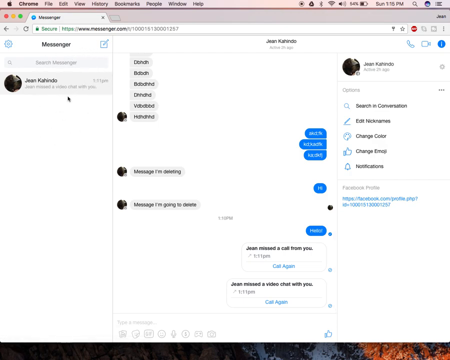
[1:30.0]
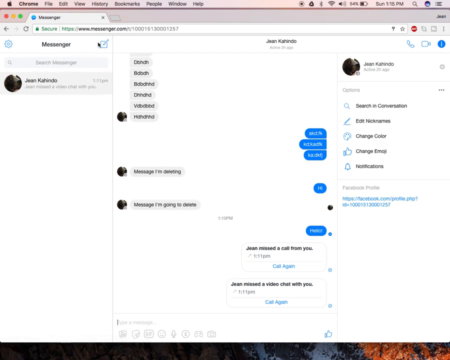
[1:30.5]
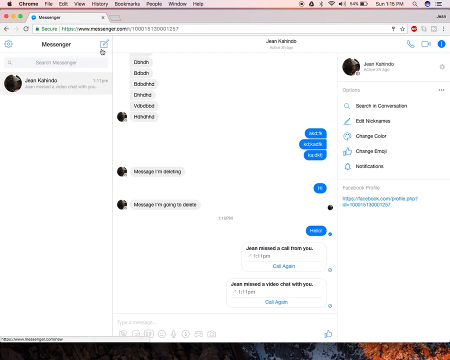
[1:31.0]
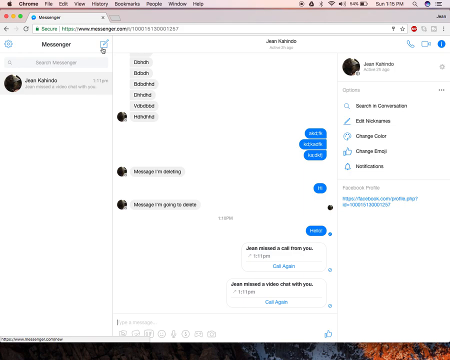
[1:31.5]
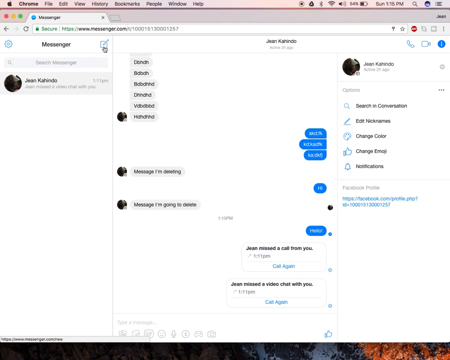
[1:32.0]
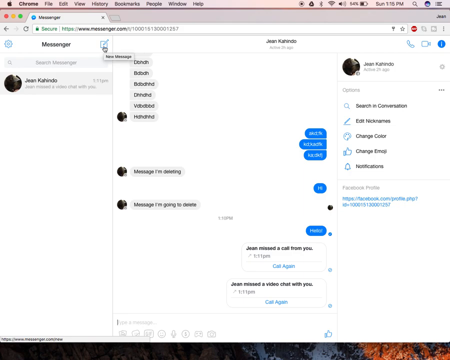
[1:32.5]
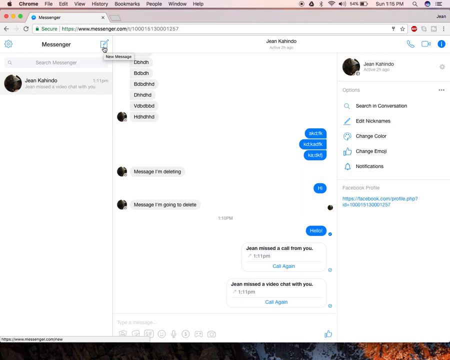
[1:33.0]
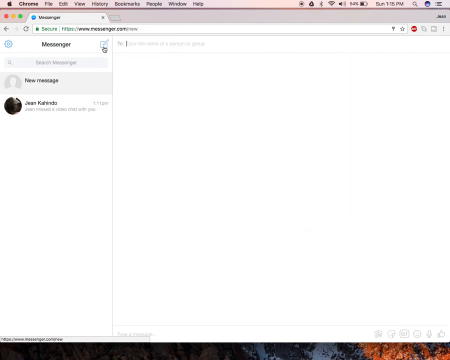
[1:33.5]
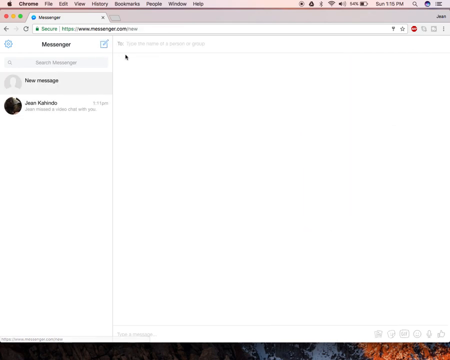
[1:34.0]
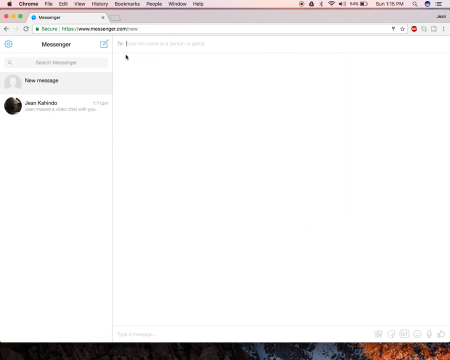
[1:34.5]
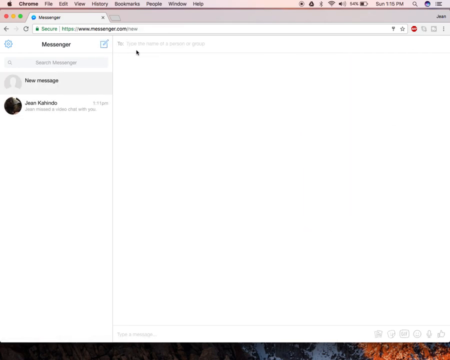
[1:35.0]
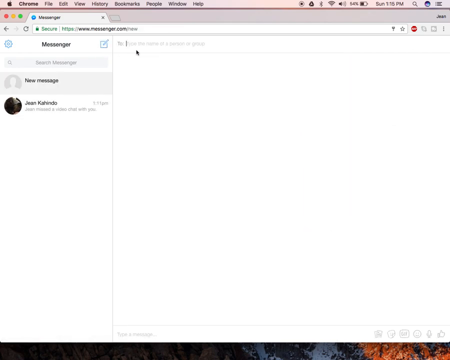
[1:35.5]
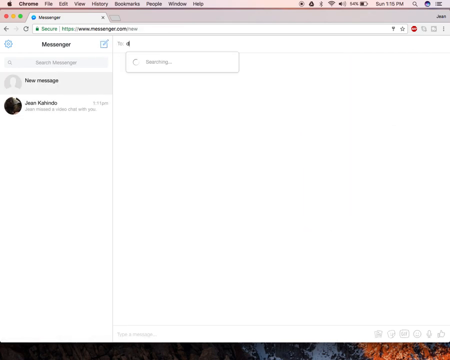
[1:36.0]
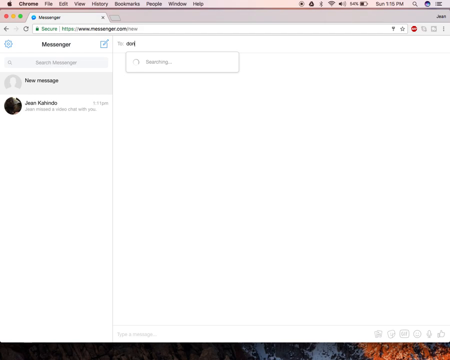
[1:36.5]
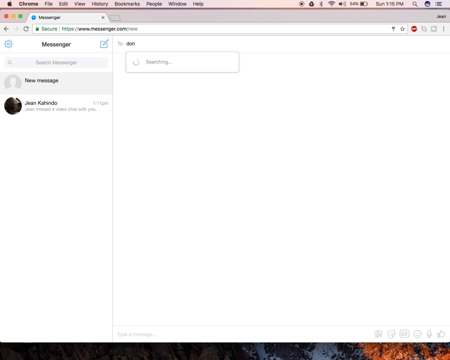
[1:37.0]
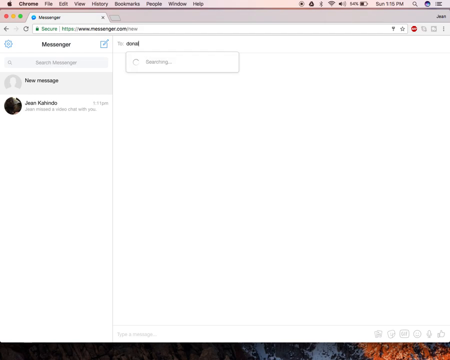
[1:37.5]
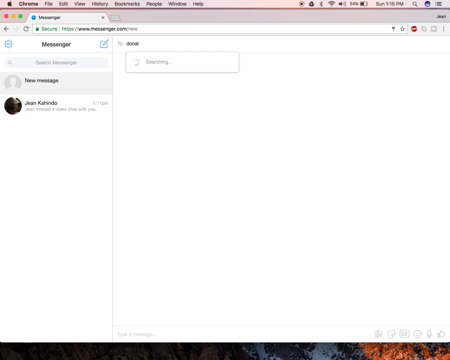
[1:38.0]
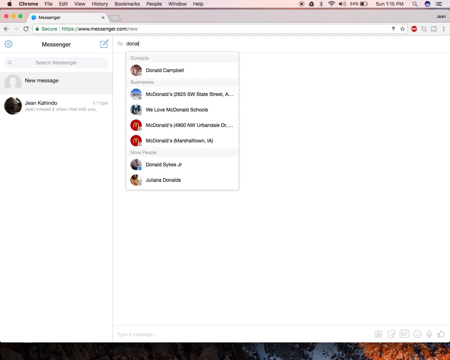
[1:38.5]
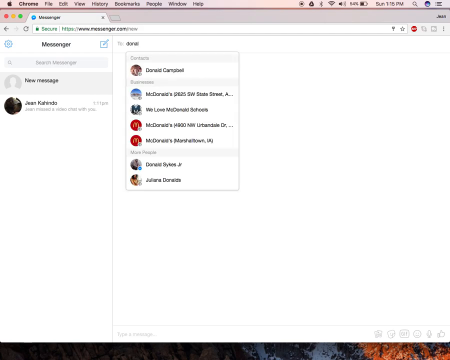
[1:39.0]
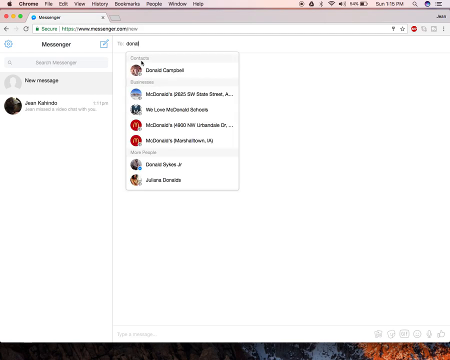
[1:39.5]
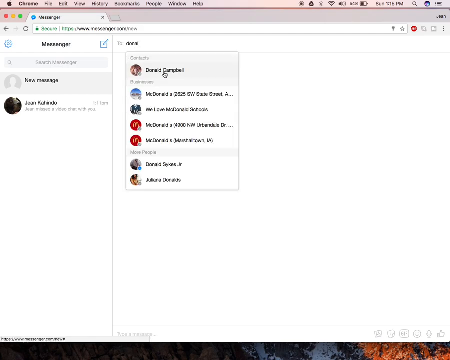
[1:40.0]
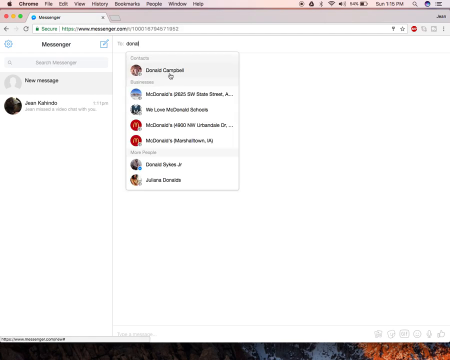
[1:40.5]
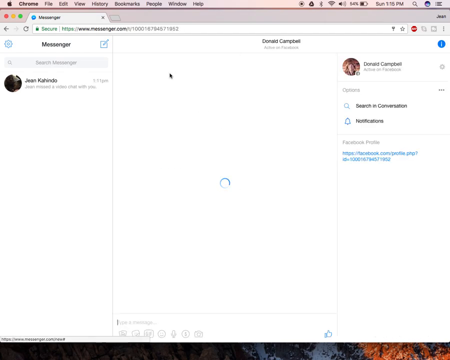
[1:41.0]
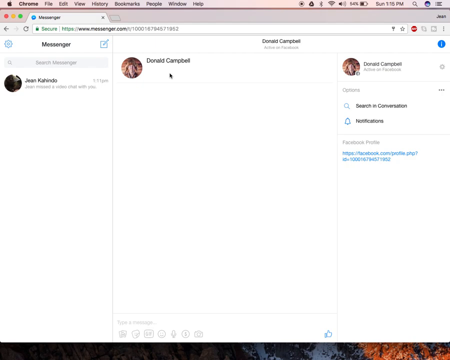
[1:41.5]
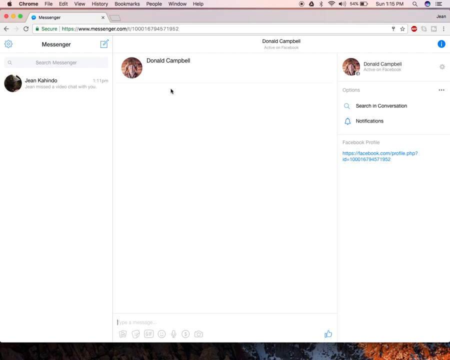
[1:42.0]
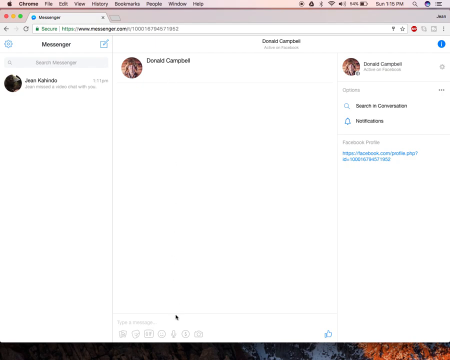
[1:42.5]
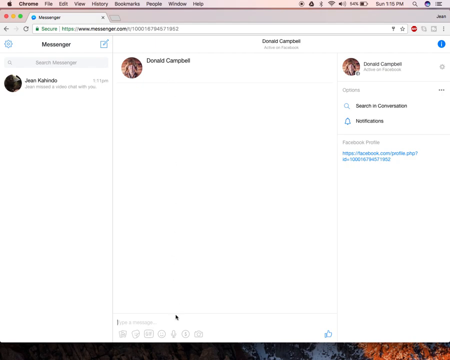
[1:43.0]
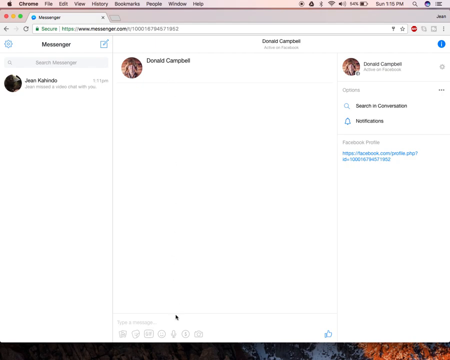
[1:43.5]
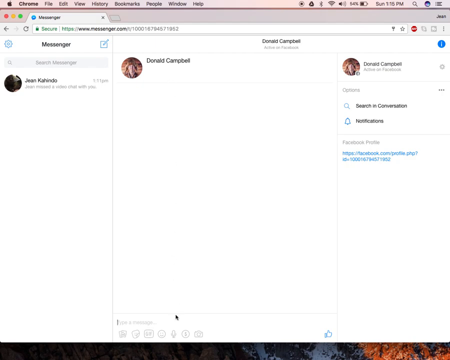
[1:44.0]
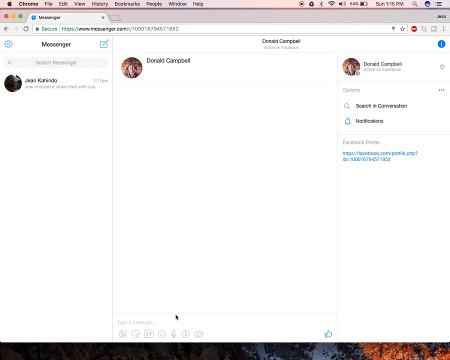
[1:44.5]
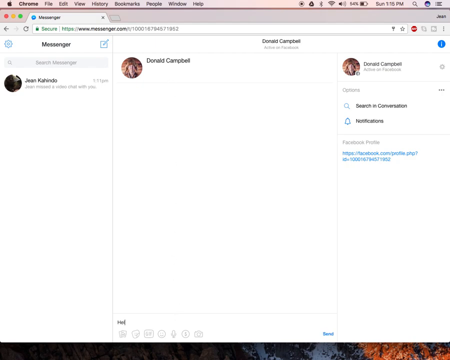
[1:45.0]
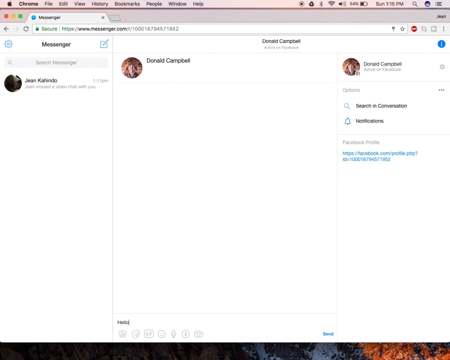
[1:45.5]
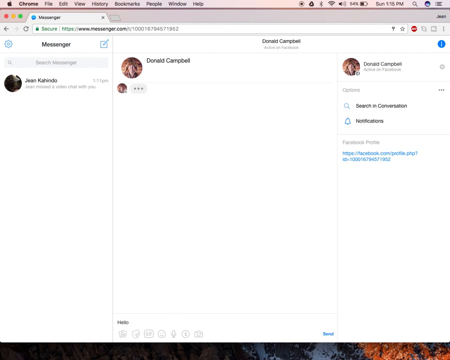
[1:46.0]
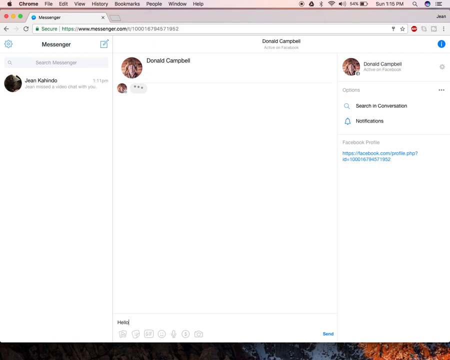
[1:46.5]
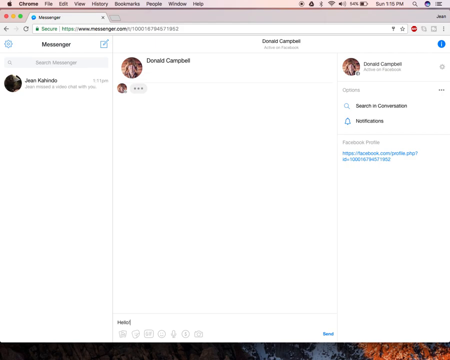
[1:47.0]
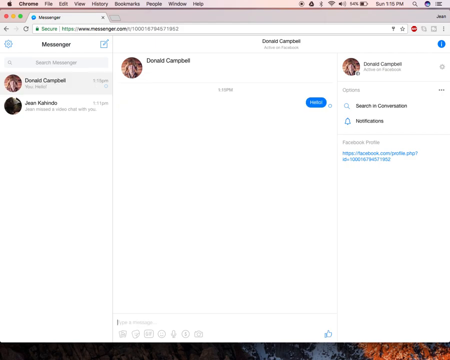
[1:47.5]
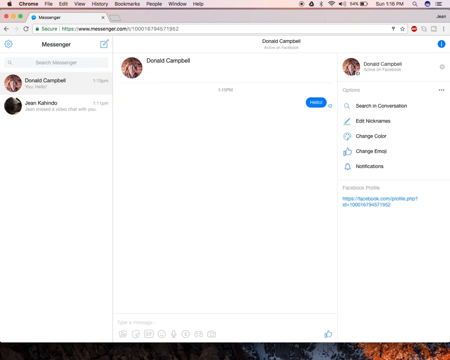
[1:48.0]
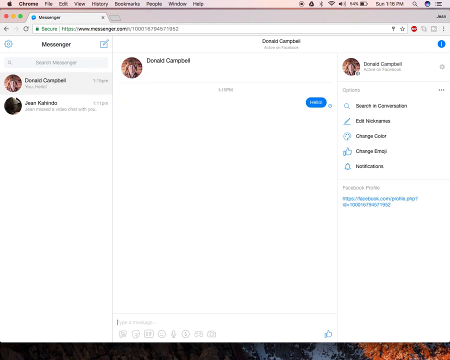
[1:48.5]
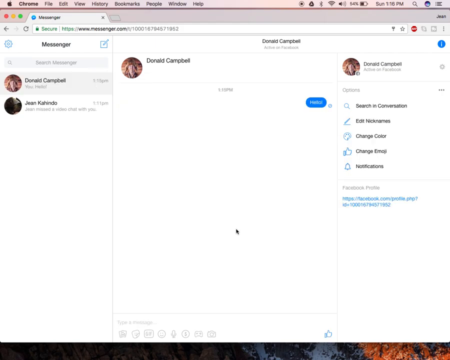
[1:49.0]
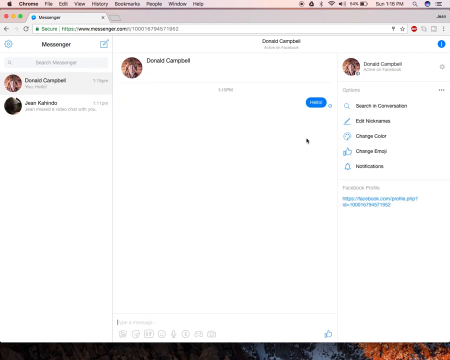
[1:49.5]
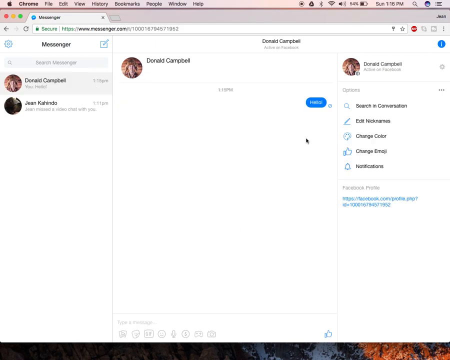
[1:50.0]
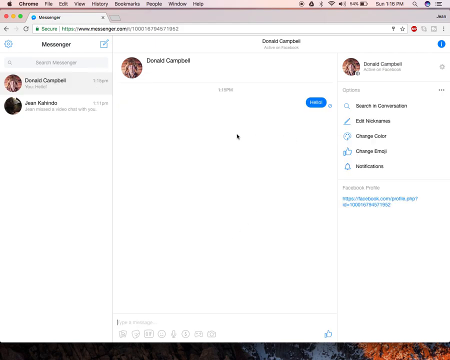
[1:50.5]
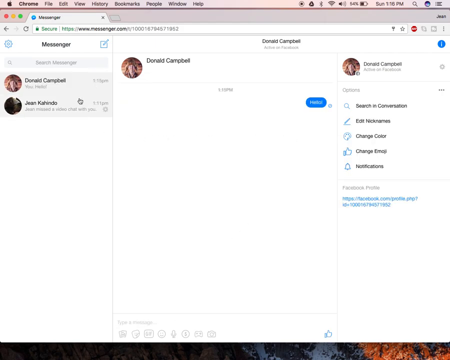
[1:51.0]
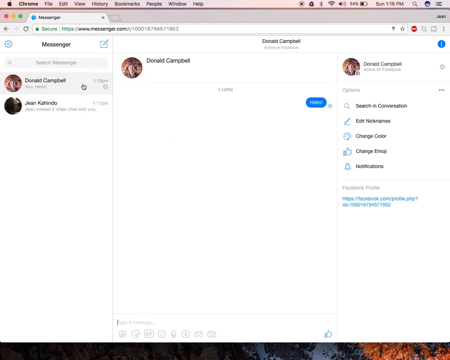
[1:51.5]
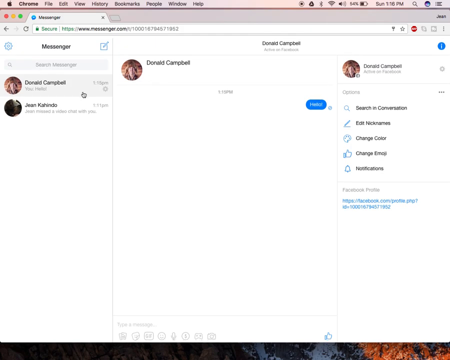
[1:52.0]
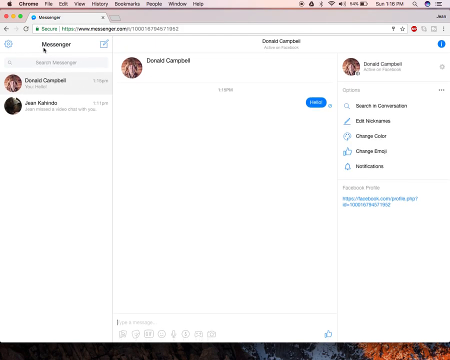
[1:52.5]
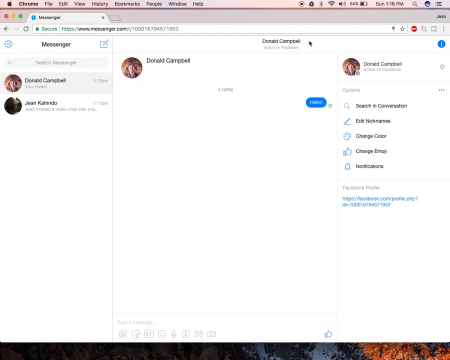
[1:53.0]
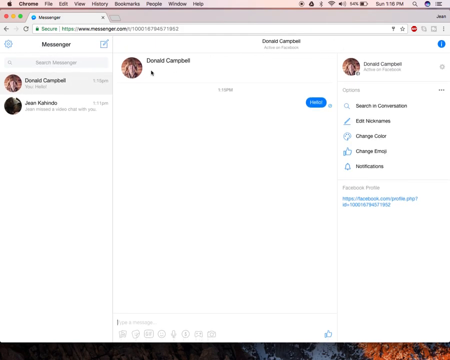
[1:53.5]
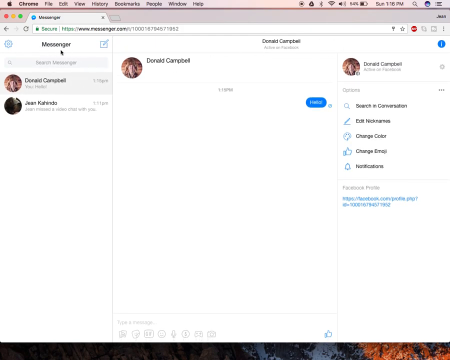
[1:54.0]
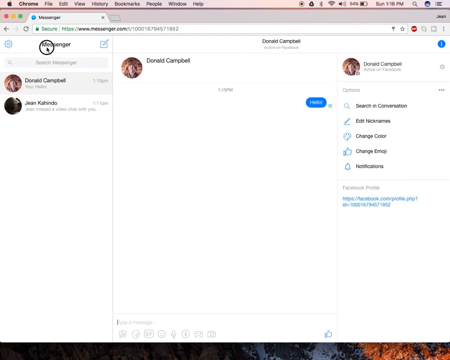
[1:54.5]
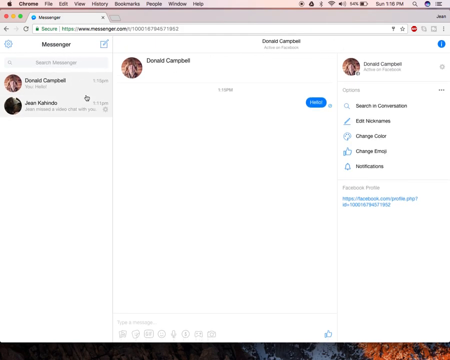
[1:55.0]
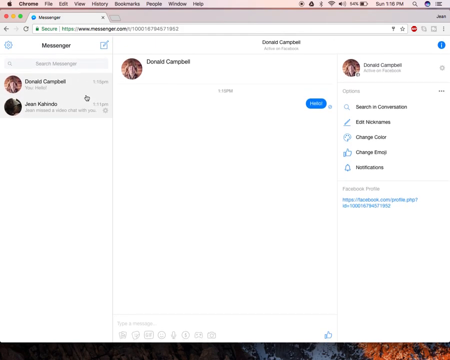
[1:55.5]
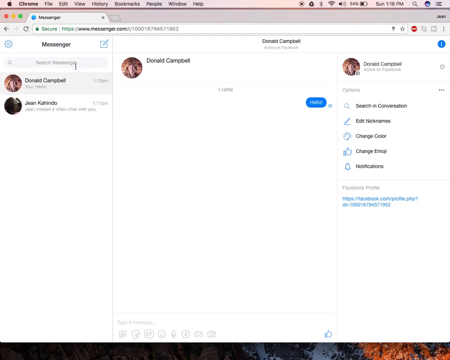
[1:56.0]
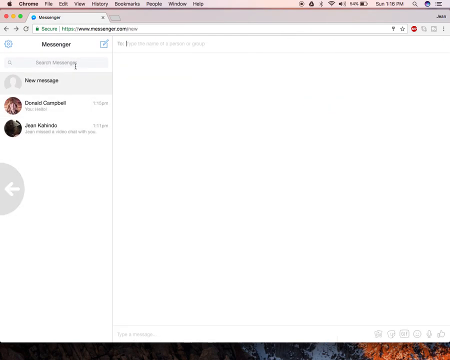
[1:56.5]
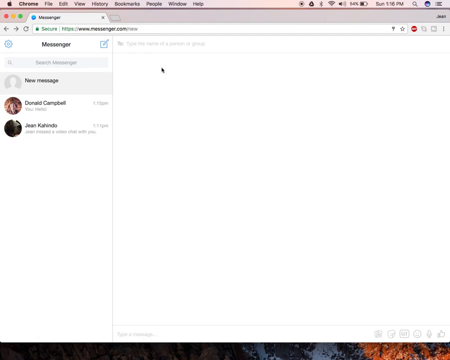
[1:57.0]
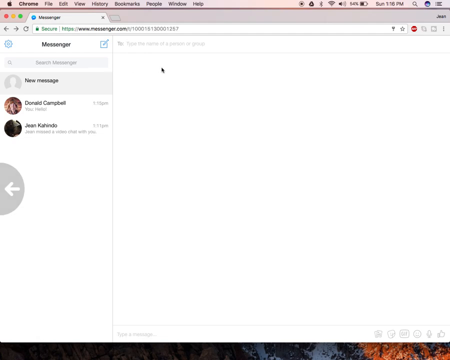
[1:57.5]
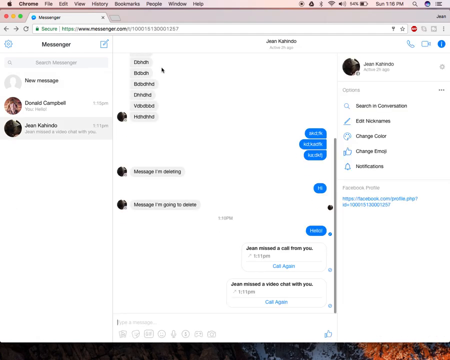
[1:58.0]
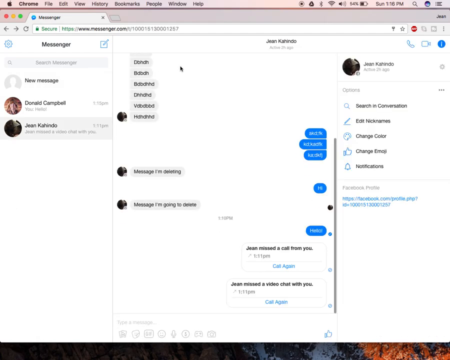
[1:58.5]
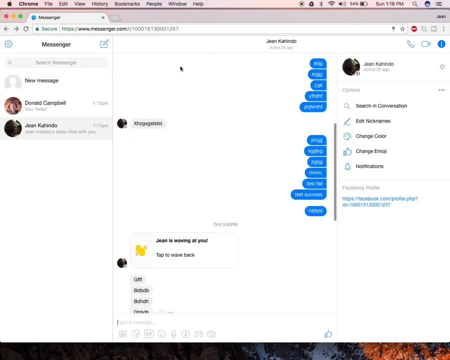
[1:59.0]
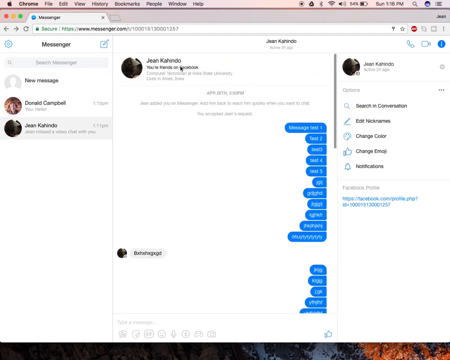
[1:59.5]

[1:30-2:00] A new chat is opened with a new person, who is searched for and added, and a text is sent to them from Jane Cahedo's account. The previous conversations with other people remain in place.